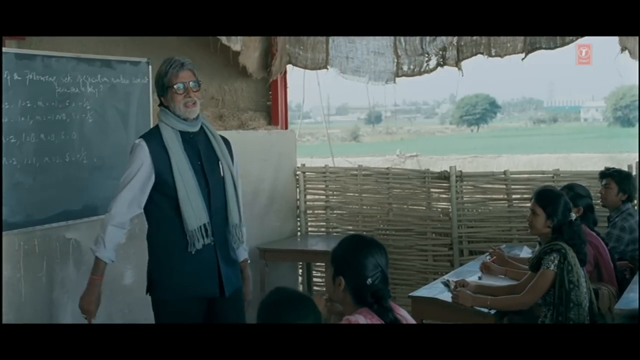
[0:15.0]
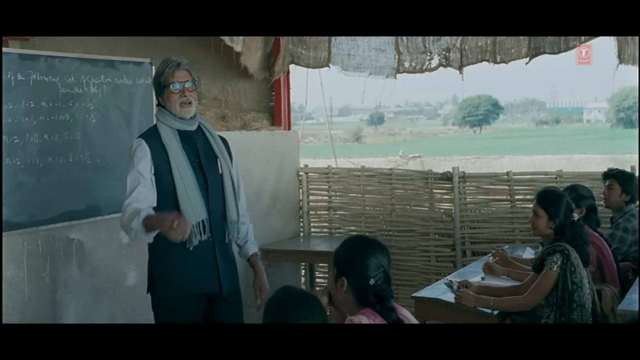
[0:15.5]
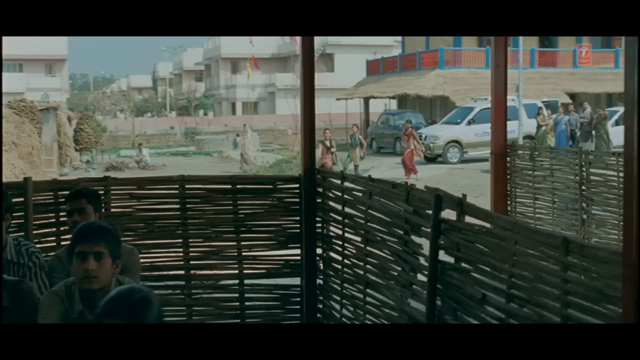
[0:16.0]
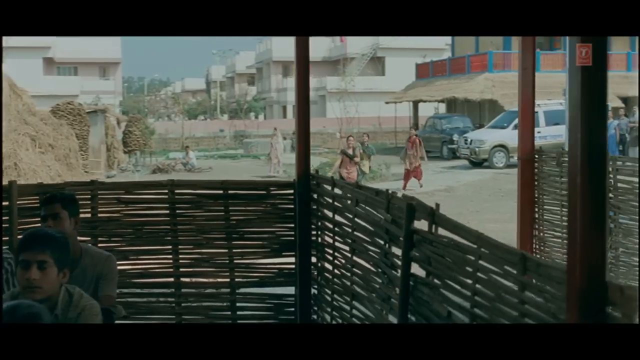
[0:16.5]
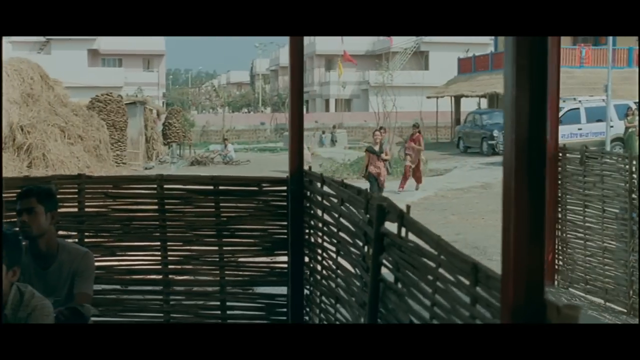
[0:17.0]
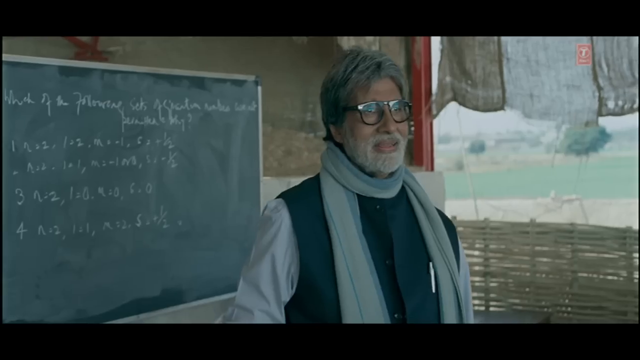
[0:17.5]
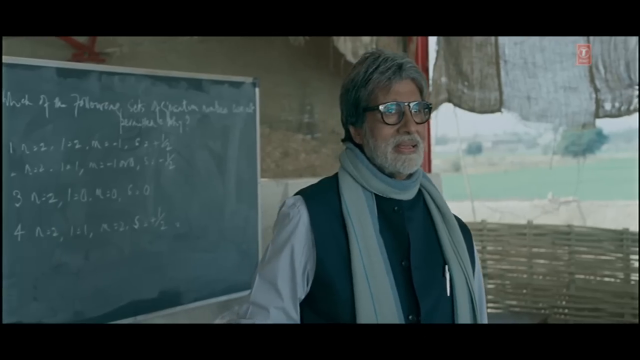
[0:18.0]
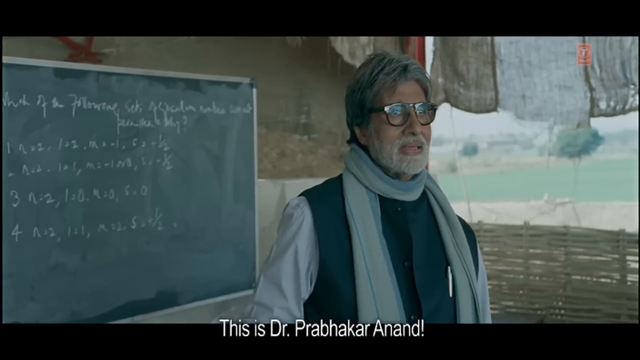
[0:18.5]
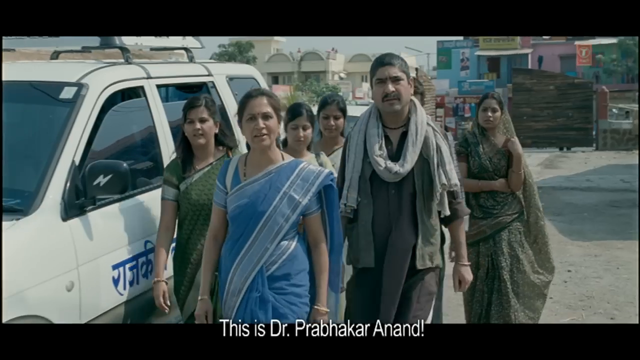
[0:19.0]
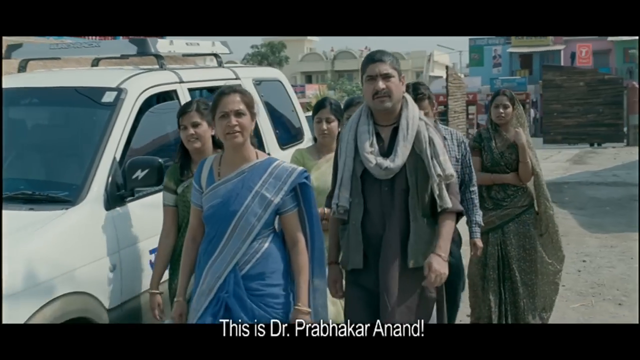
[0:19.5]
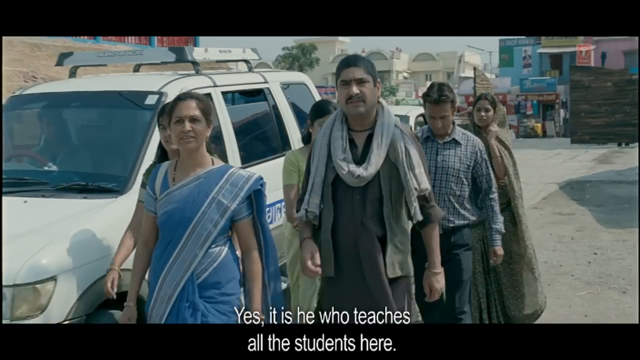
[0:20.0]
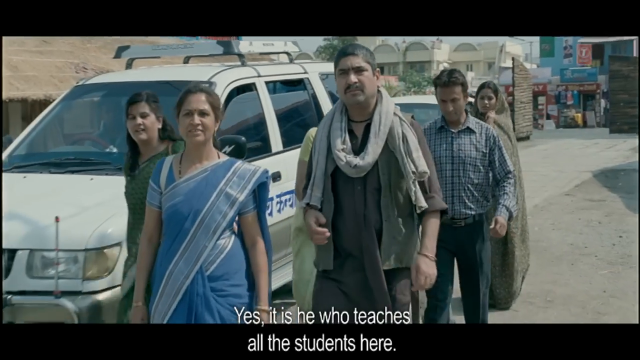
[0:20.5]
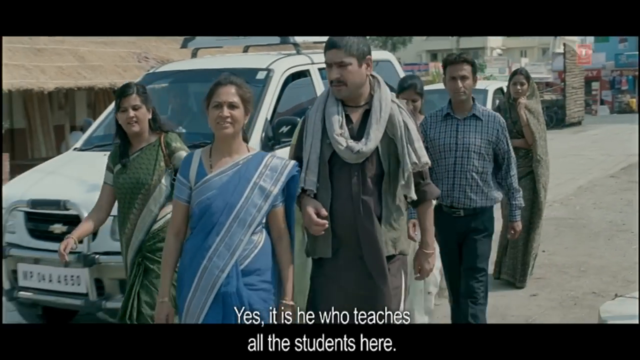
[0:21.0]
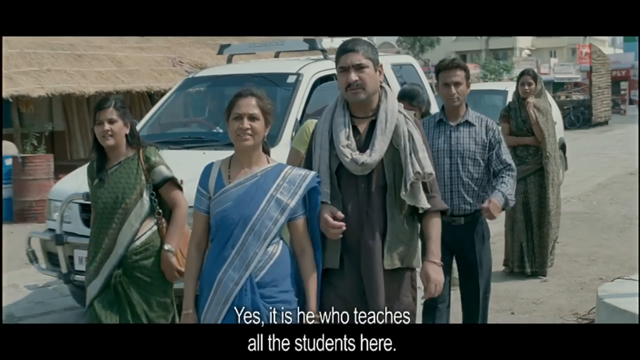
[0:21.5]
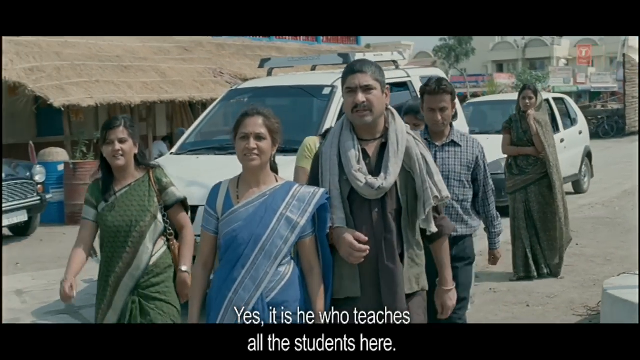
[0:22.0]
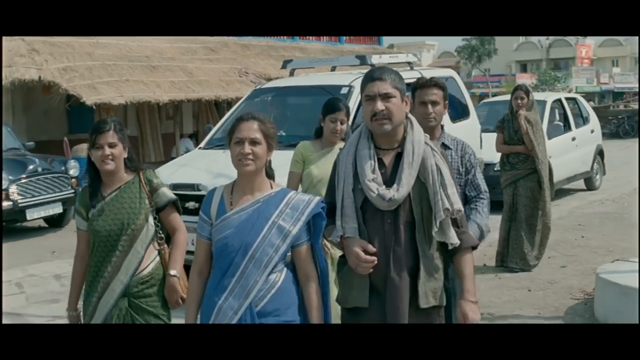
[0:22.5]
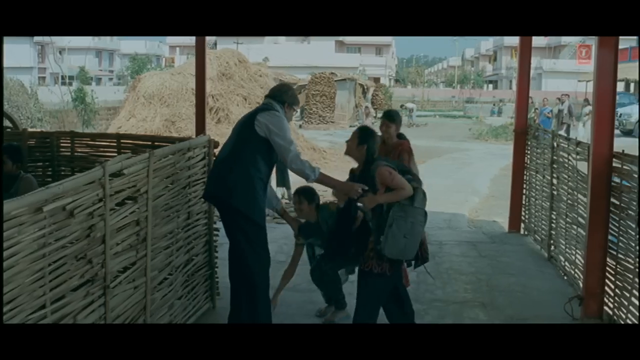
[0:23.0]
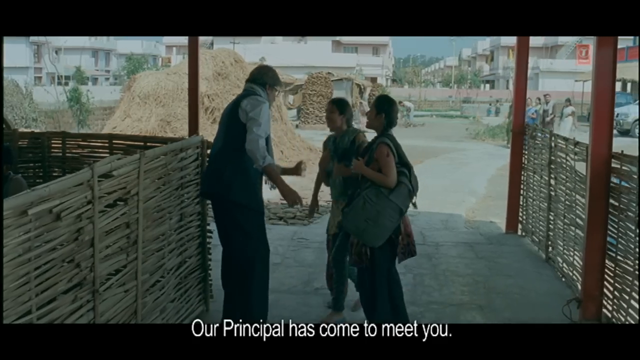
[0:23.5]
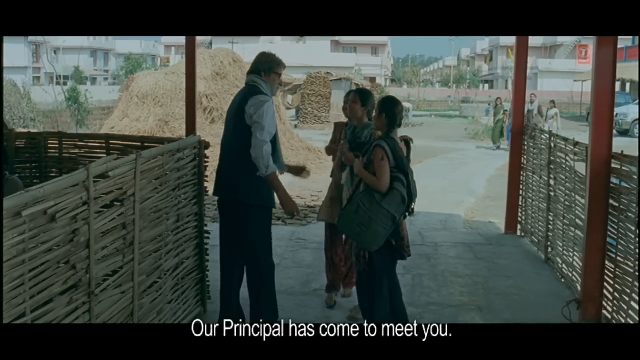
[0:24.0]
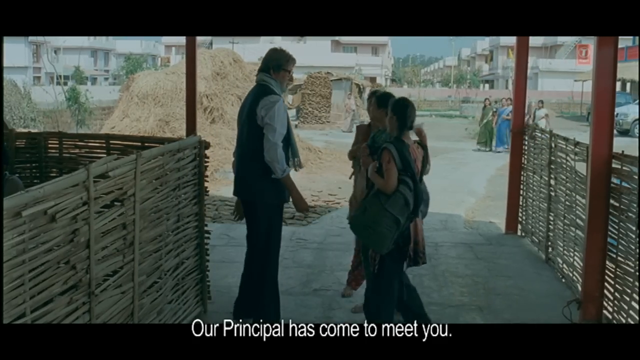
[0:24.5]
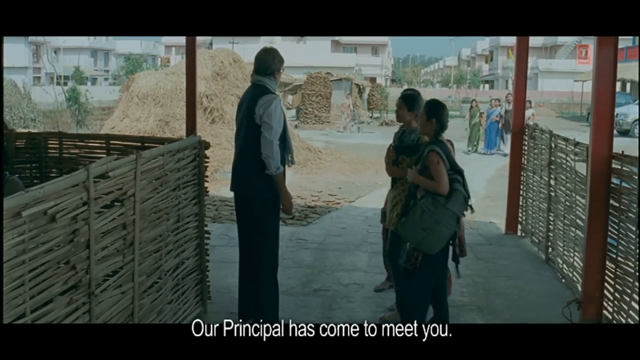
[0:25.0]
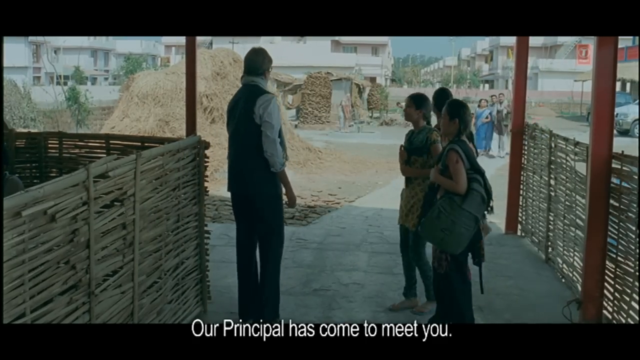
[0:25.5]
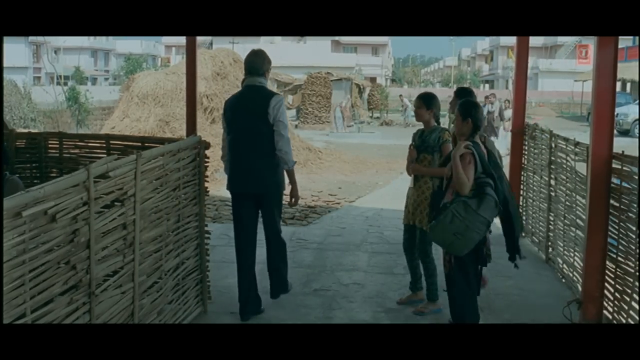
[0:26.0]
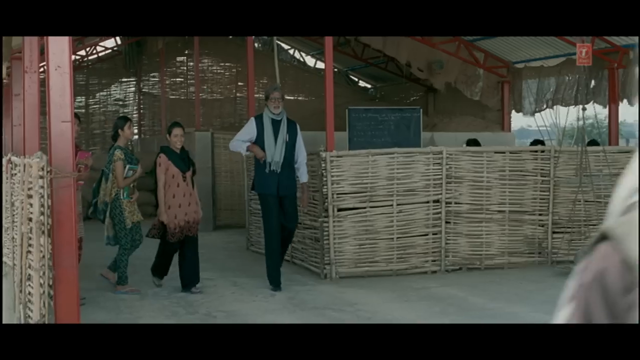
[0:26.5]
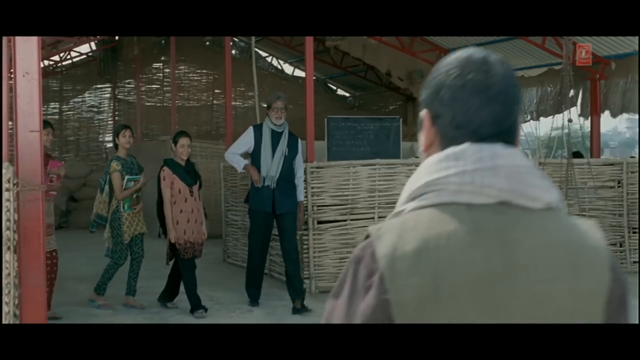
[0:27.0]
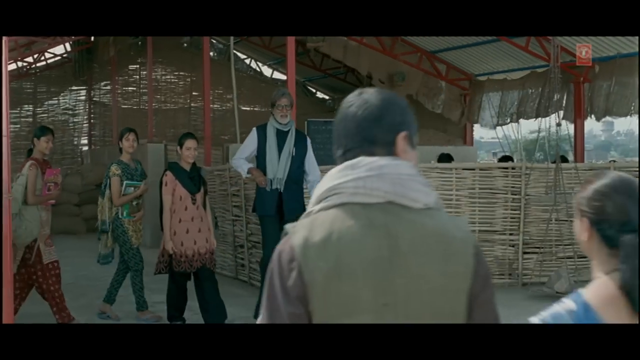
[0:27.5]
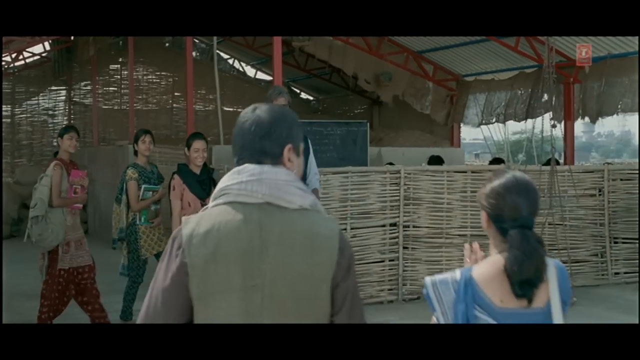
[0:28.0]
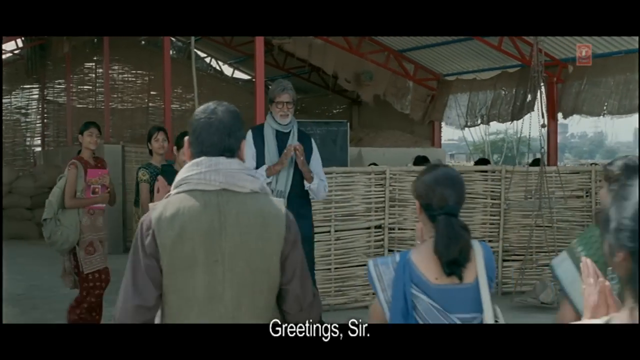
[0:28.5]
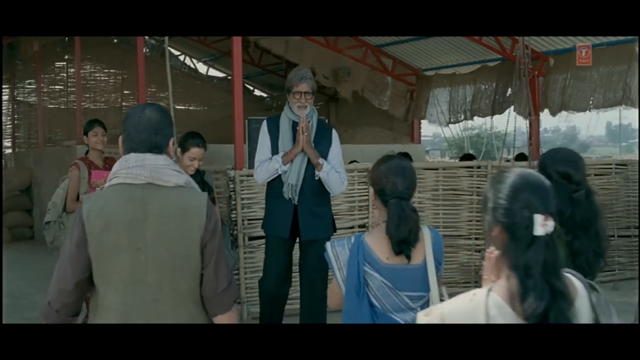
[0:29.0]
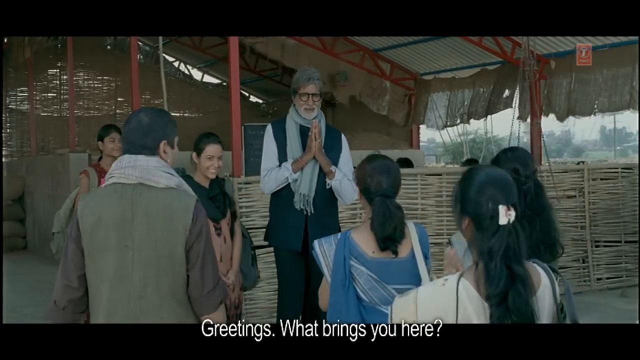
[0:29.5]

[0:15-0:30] The two groups of people from the vehicles appear to walk toward the teacher who is teaching outside, and he comes out from his little makeshift classroom to greet them, making a prayer-hand greeting as they come running. His face looks a little worried as he sees them. He is very tall compared to all of them, with gray hair and glasses, and wears a scarf-like thing around his neck. Before the group arrives, three girls with school bags kind of run up, and they are right beside him as he greets the people from the vehicles. The arriving group does not look necessarily happy; they look as if they need to ask him something.